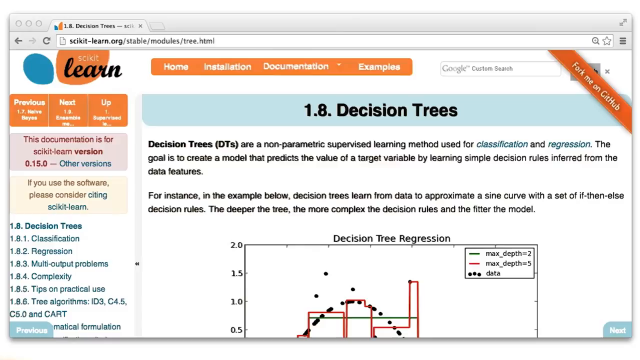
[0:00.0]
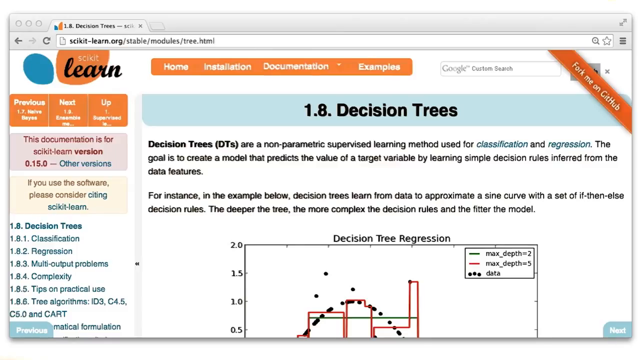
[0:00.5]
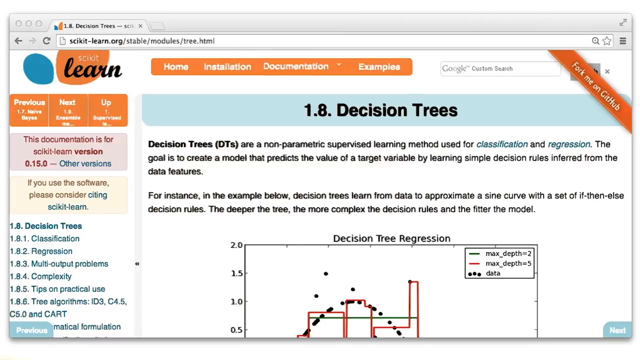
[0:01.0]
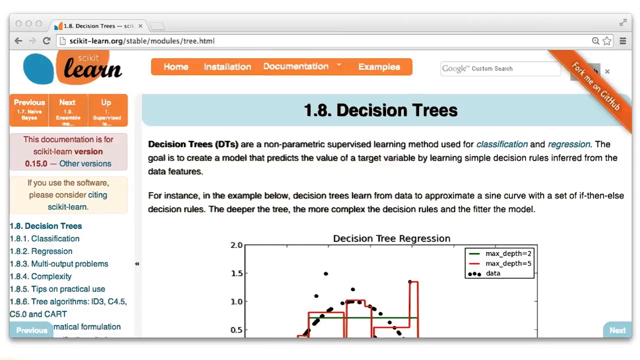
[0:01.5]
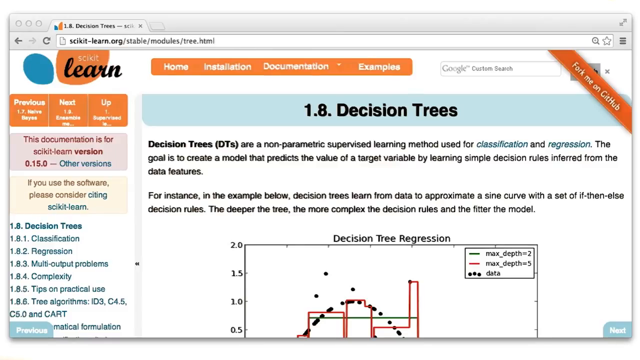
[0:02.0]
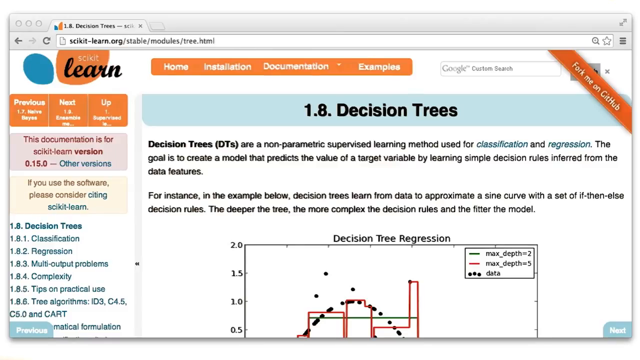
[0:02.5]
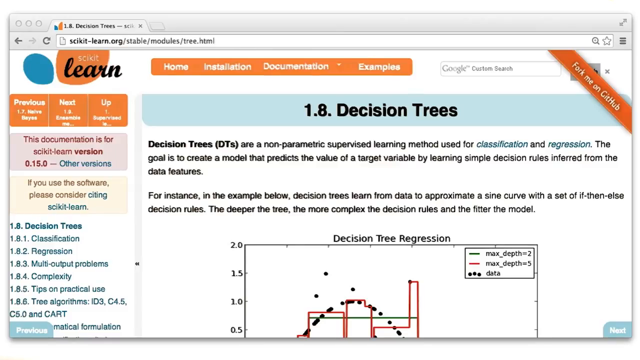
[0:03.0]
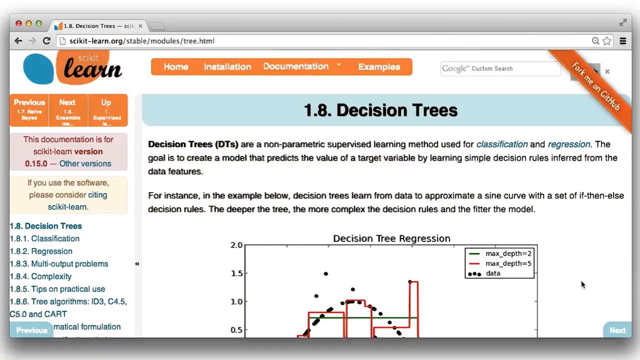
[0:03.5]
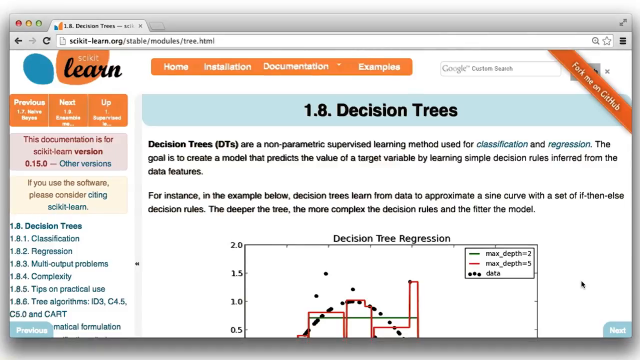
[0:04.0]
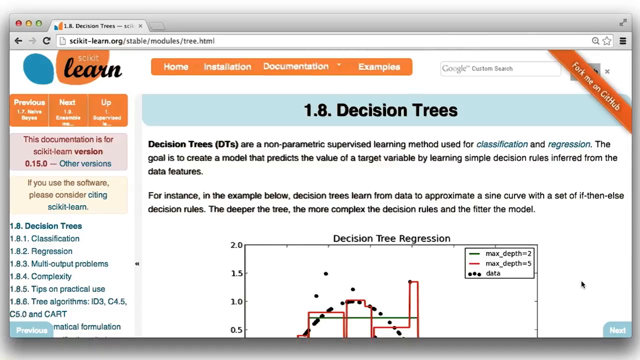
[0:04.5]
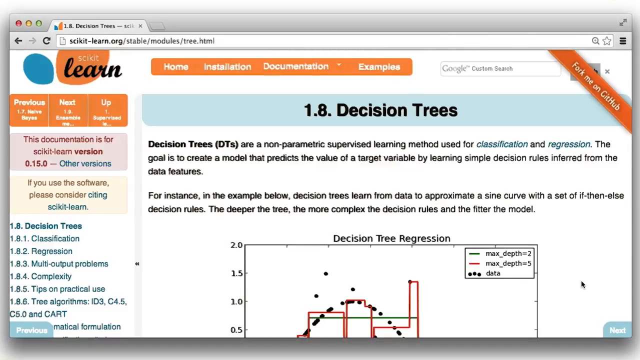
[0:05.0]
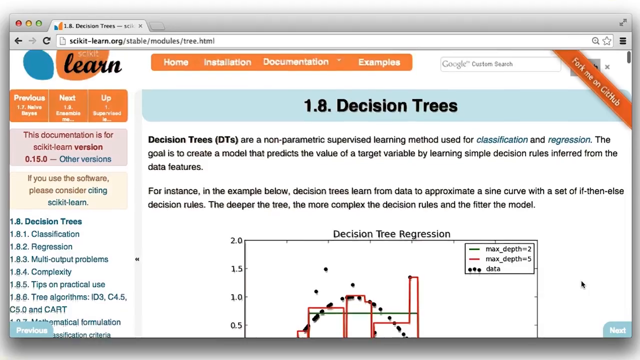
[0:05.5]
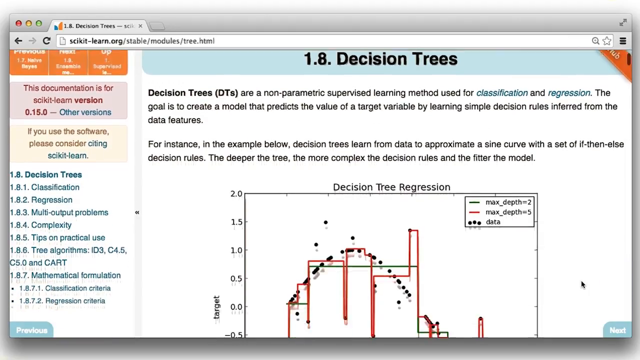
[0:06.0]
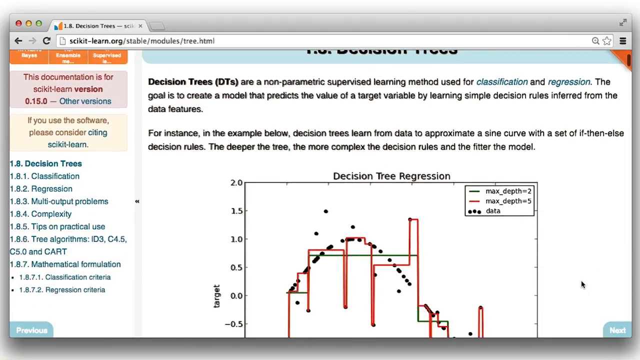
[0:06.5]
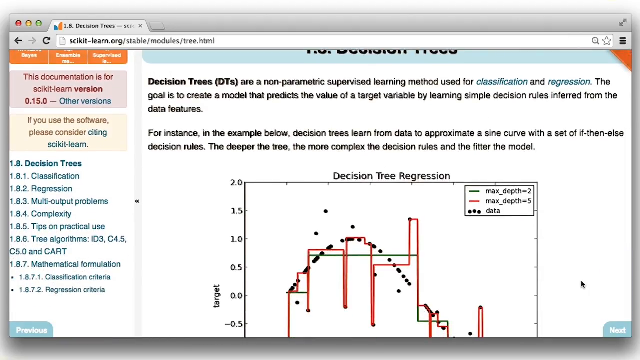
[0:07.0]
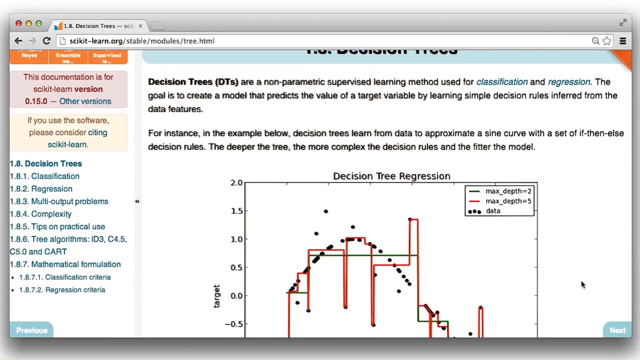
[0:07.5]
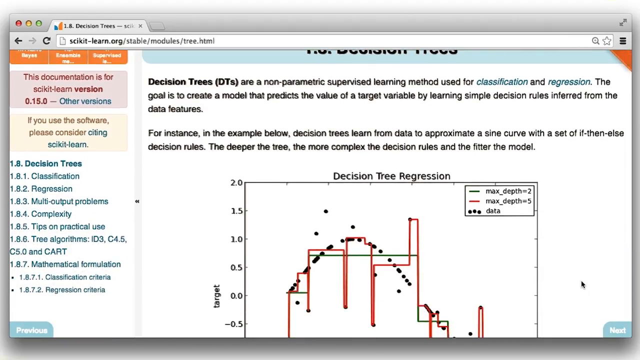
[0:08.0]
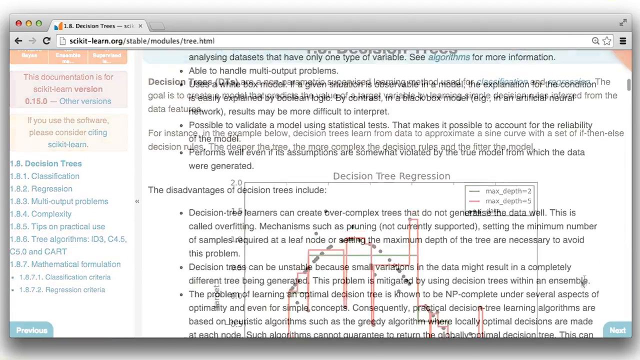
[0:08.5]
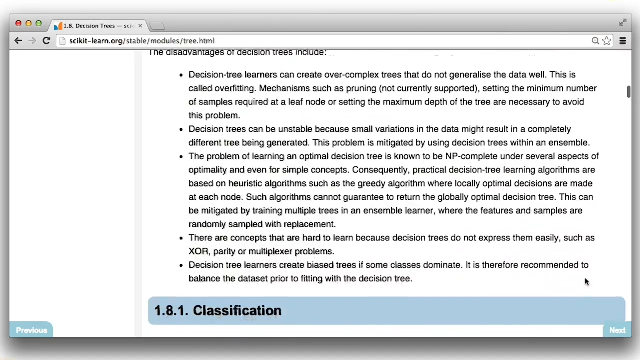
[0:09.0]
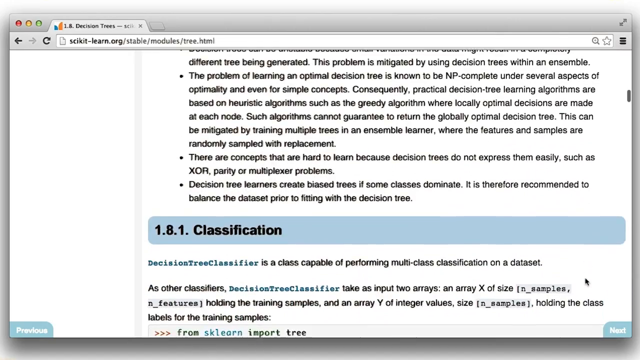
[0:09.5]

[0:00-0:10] A browser is open on macOS in a screen recording, showing a website called scikit-learn with the page "1.8 decision trees" open. It looks like an informational website, and on the left side is a navigation with other topics related to decision trees. After a few seconds, a shadow is added to the browser. The person recording then scrolls down the page, revealing more of its contents and some of the subheadings. The first topic, classification, shows up a little, and there are some code snippets included in that topic.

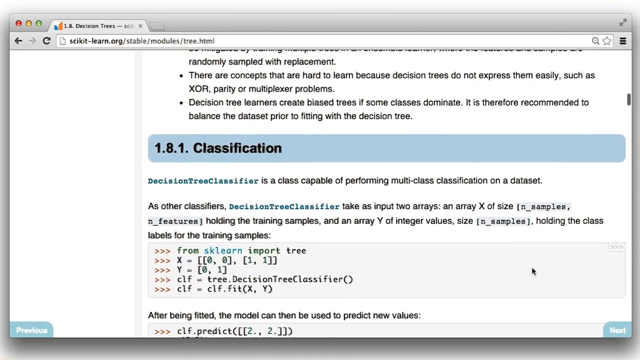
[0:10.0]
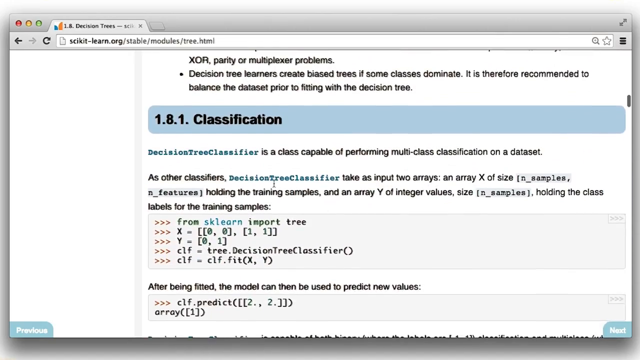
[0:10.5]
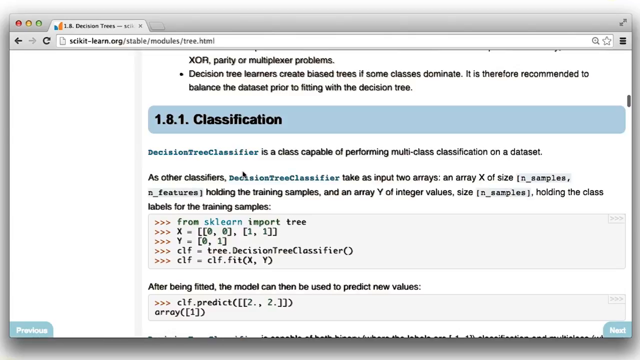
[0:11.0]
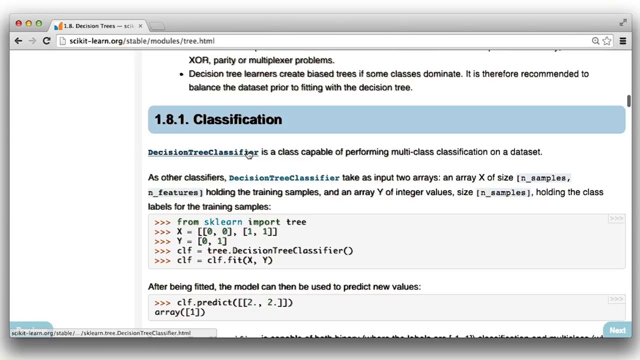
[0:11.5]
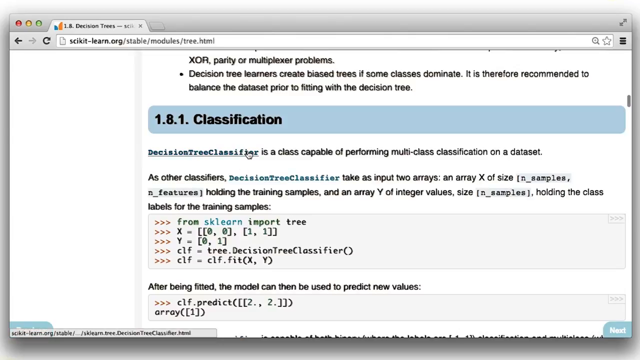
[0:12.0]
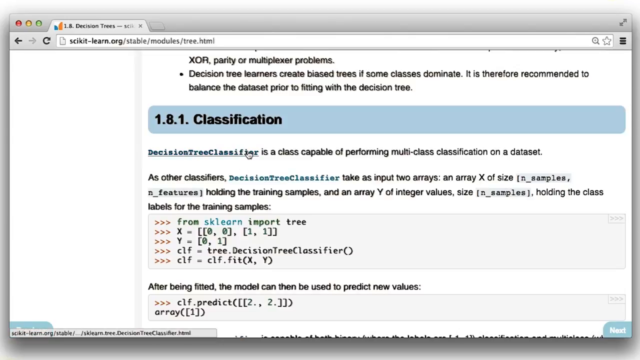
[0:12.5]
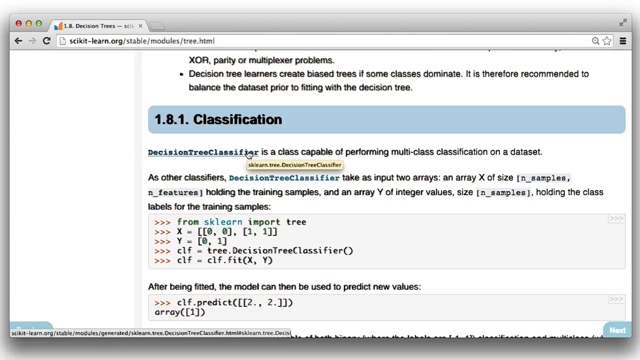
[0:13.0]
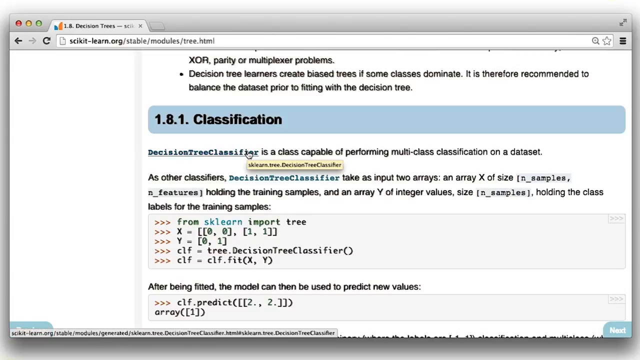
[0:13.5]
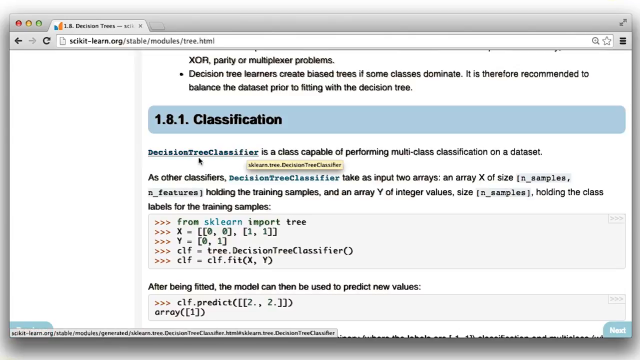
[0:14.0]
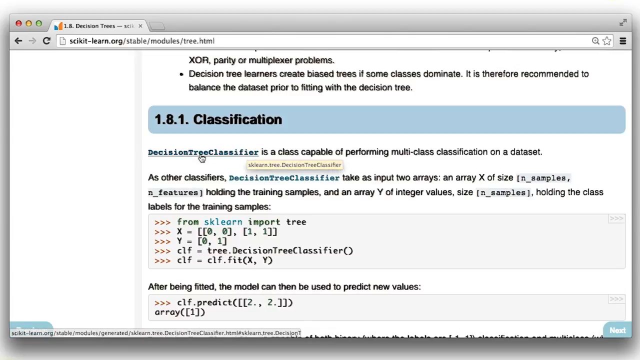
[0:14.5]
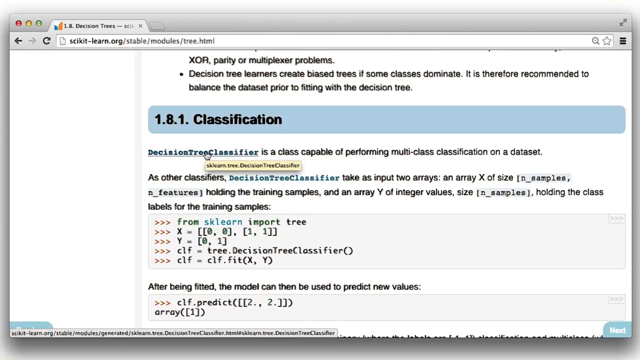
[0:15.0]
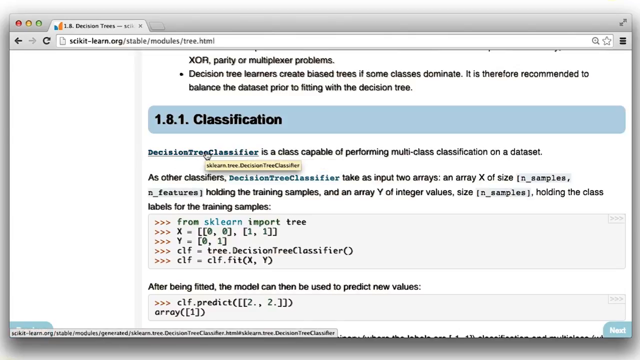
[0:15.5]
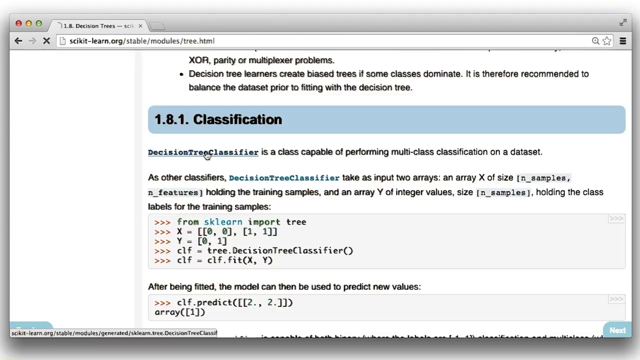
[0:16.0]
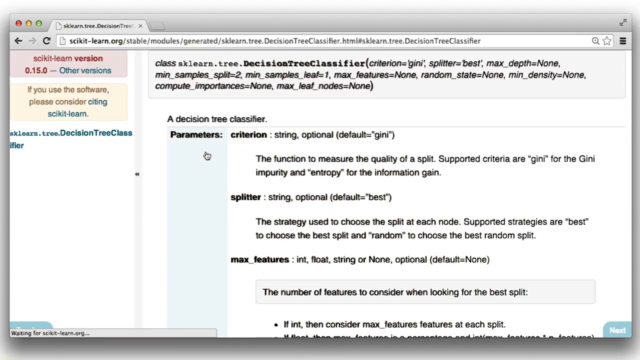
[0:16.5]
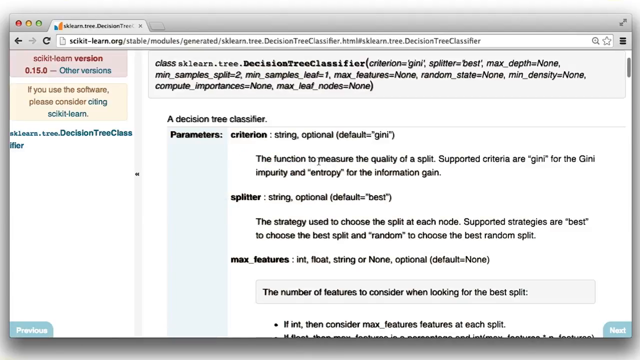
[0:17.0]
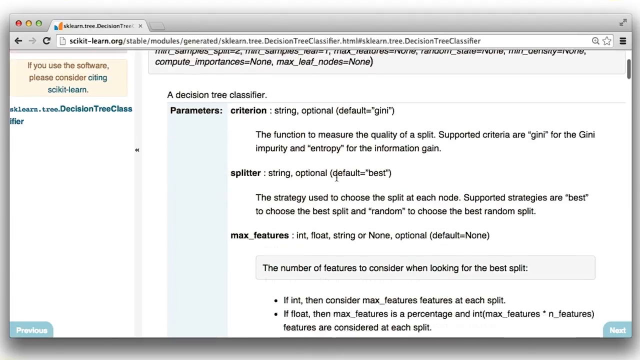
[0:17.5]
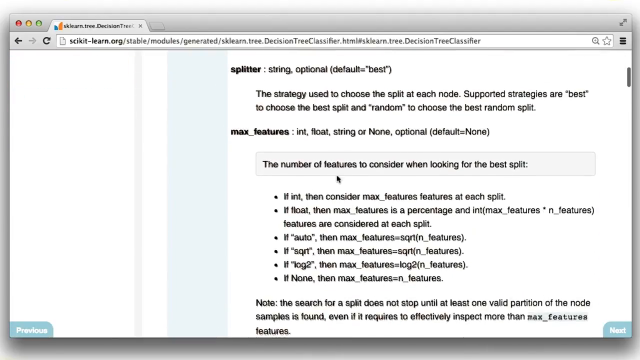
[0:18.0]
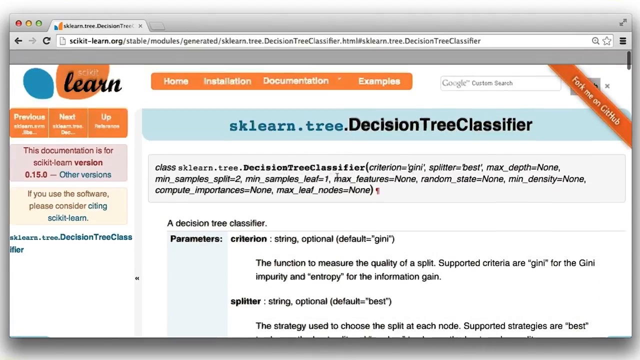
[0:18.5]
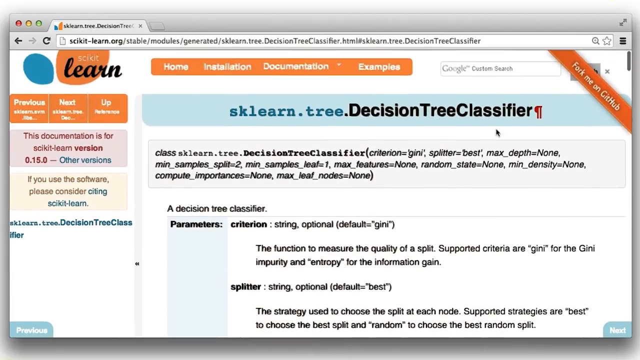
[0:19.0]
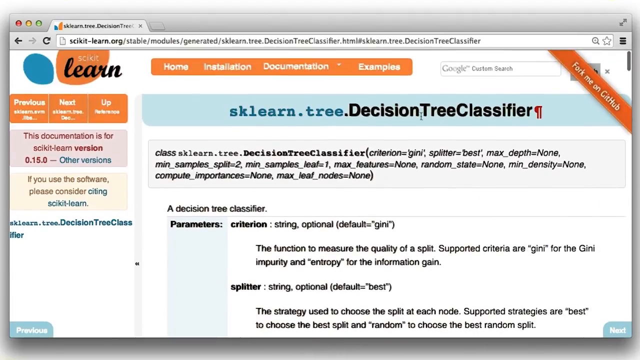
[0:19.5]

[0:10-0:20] The classification topic, under subheading 1.8.1, is shown. Its first sentence reads "DecisionTreeClassifier is a class capable of performing multi-class classification on a dataset." The word DecisionTreeClassifier is highlighted, indicating a URL. The person recording hovers over it, and a pop-up appears with "sklearn.tree.decision tree classifier". When it is clicked, the class for this word shows up, with further details revealed underneath, including parameters listed in a table below. An example of how to implement the class is given with parentheses.